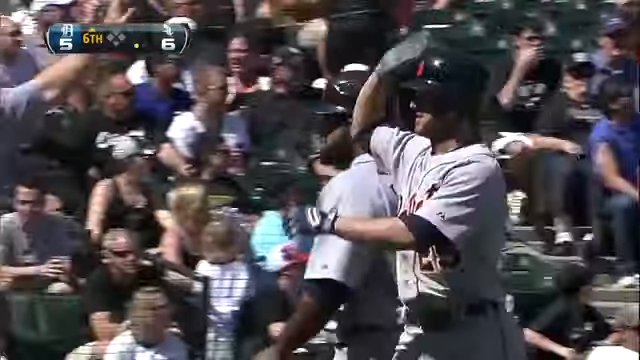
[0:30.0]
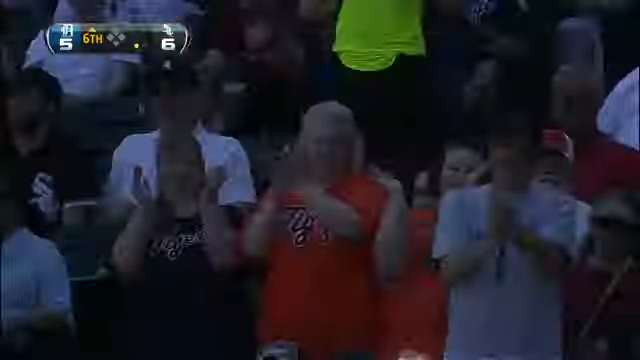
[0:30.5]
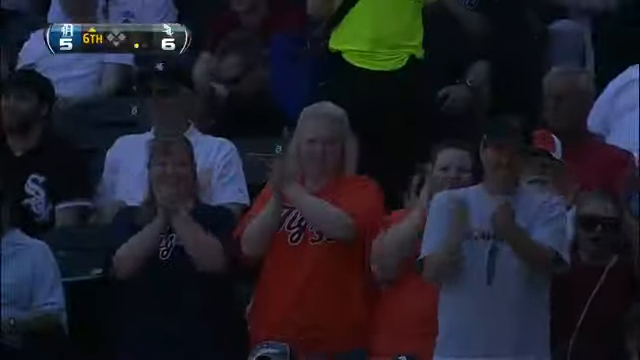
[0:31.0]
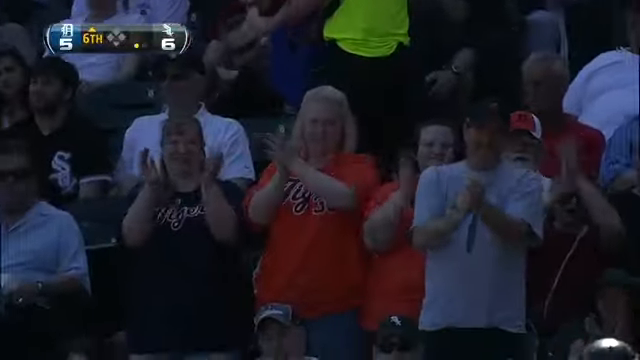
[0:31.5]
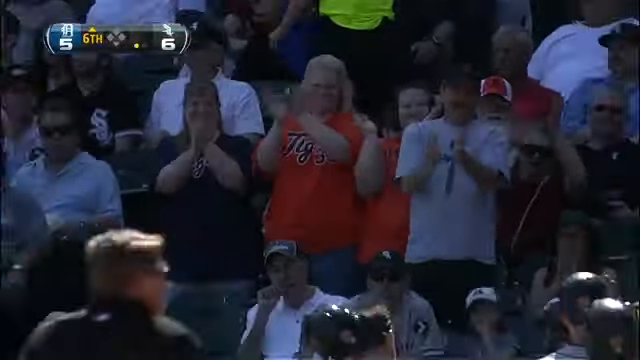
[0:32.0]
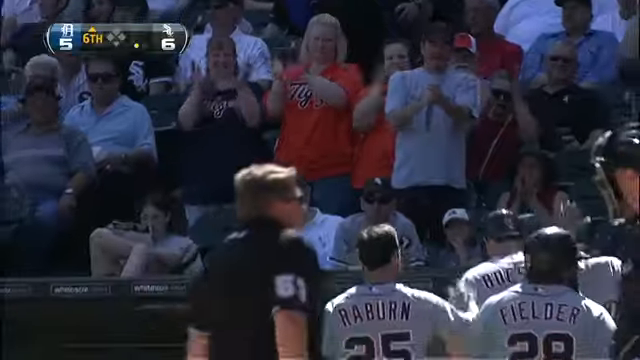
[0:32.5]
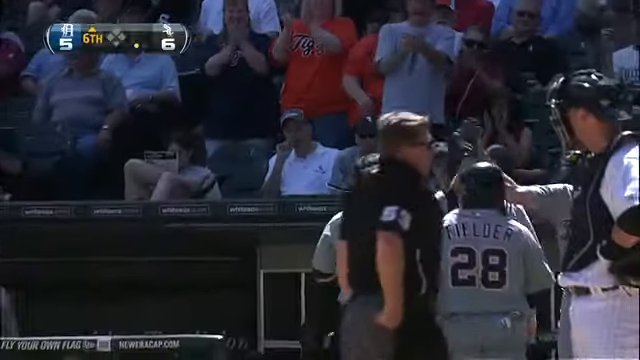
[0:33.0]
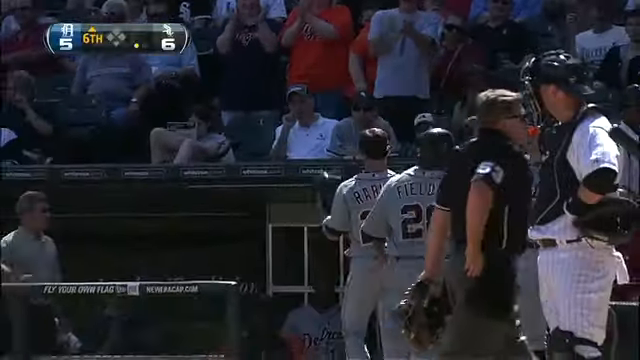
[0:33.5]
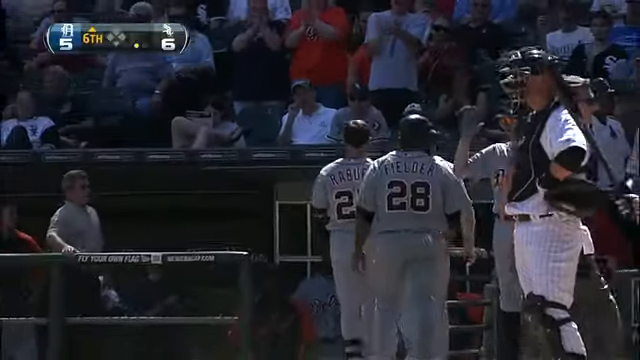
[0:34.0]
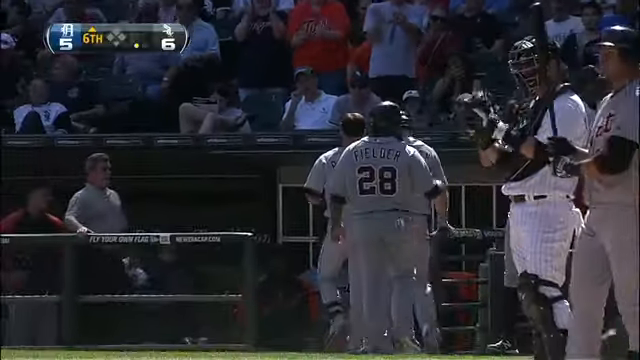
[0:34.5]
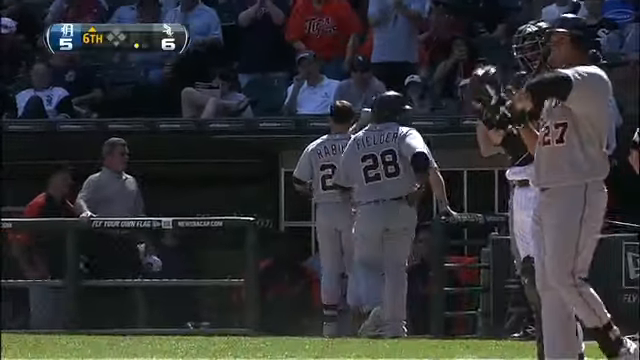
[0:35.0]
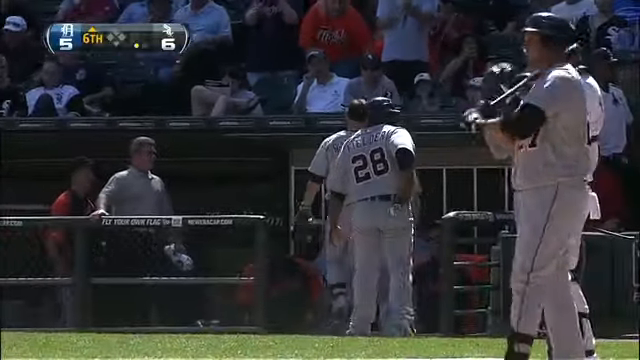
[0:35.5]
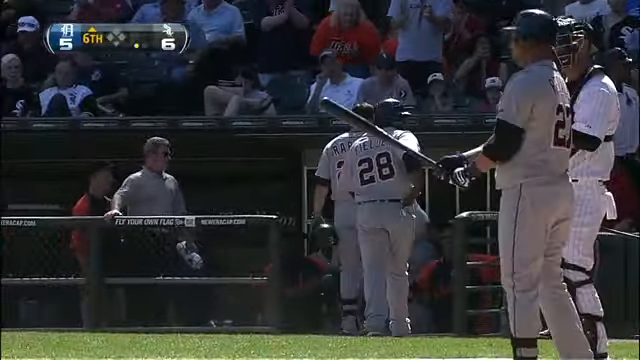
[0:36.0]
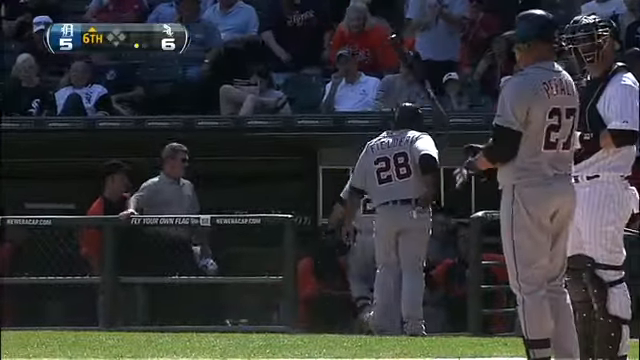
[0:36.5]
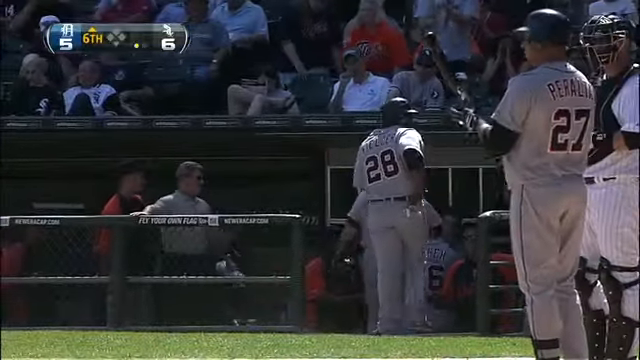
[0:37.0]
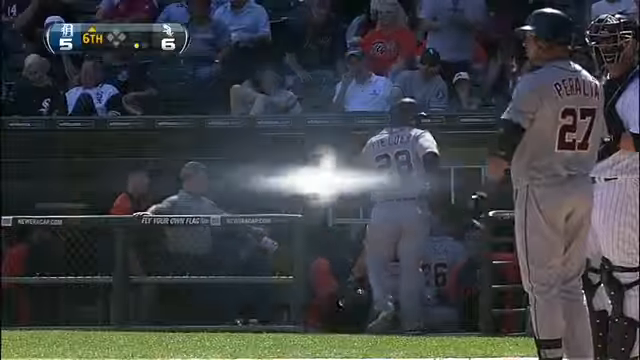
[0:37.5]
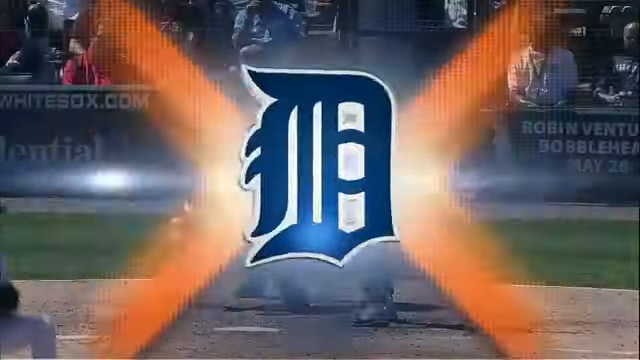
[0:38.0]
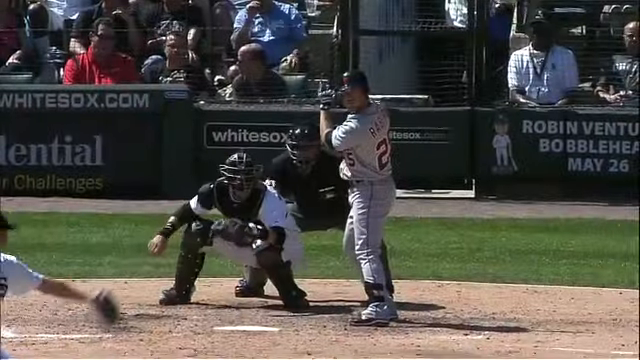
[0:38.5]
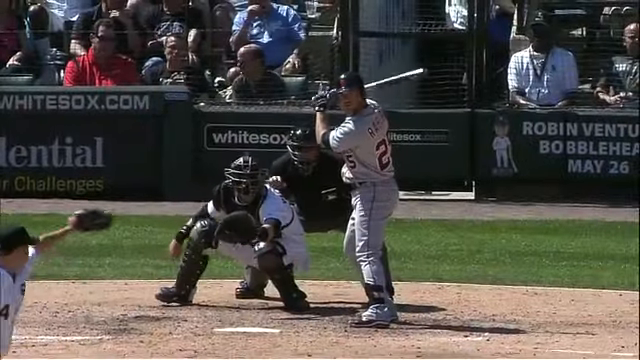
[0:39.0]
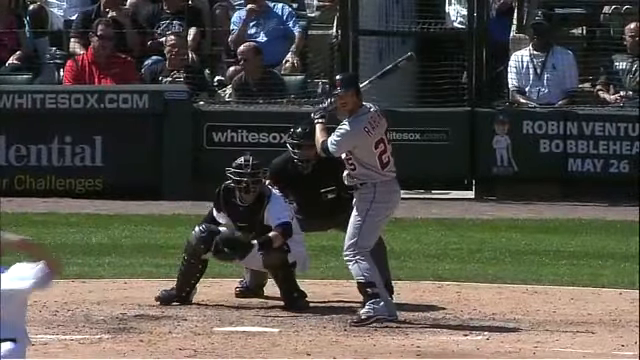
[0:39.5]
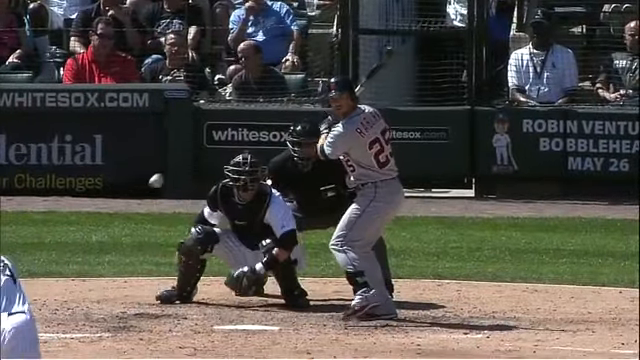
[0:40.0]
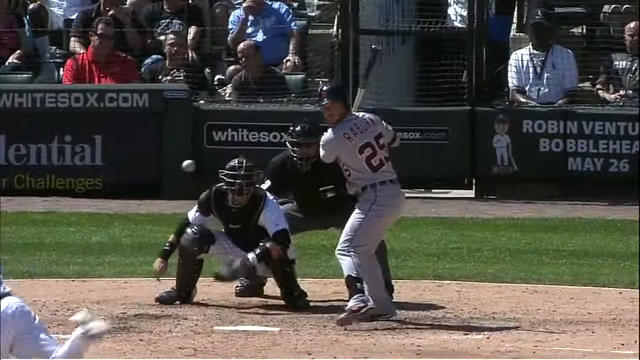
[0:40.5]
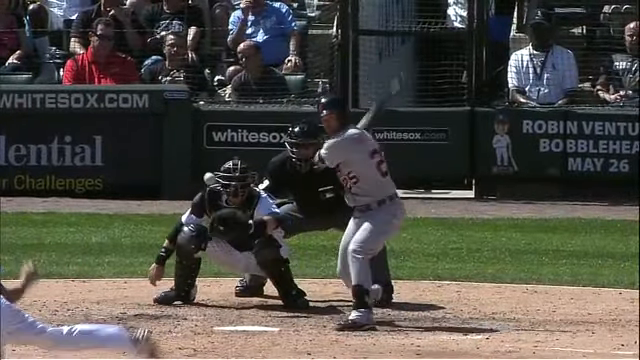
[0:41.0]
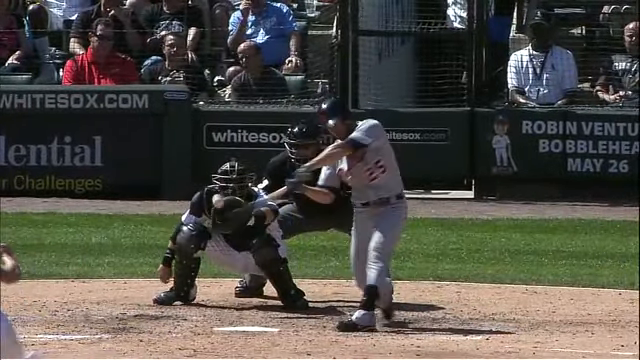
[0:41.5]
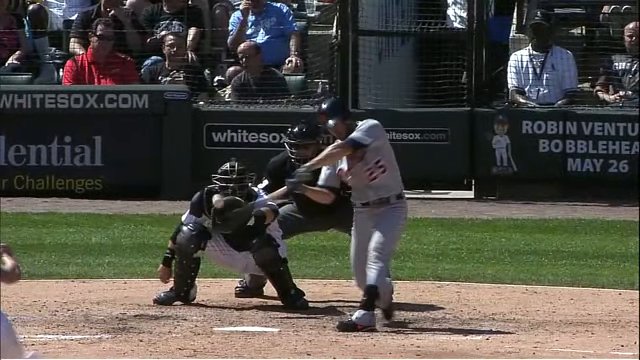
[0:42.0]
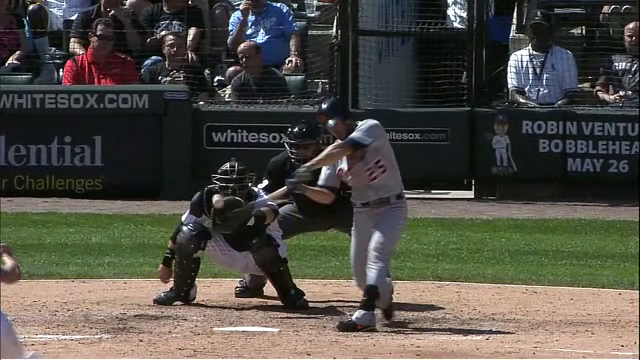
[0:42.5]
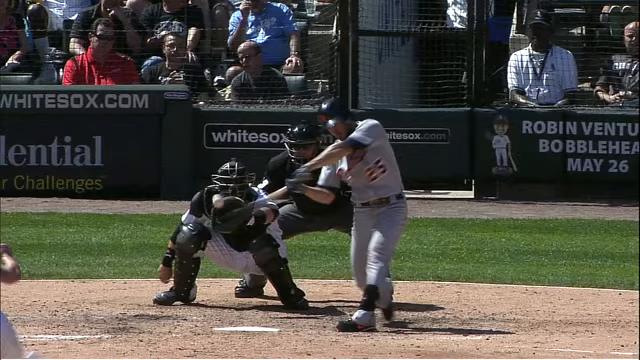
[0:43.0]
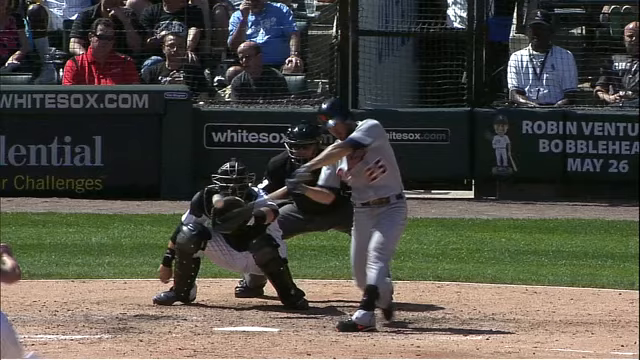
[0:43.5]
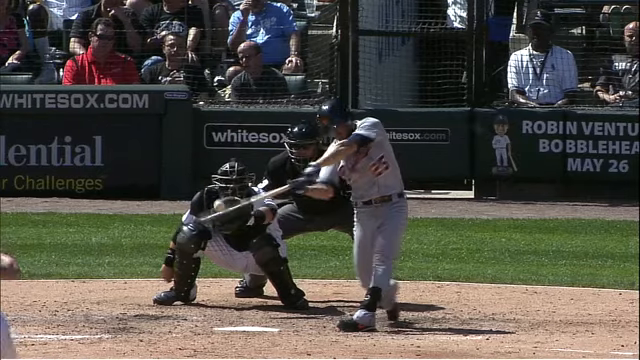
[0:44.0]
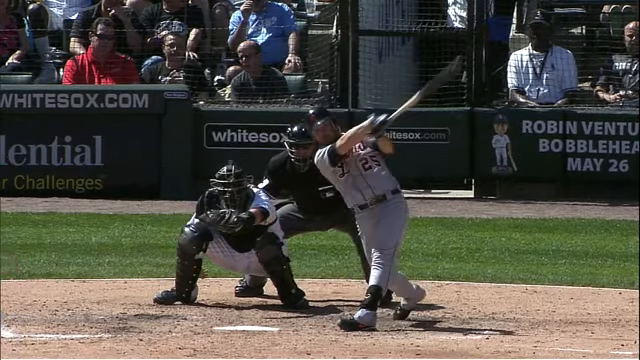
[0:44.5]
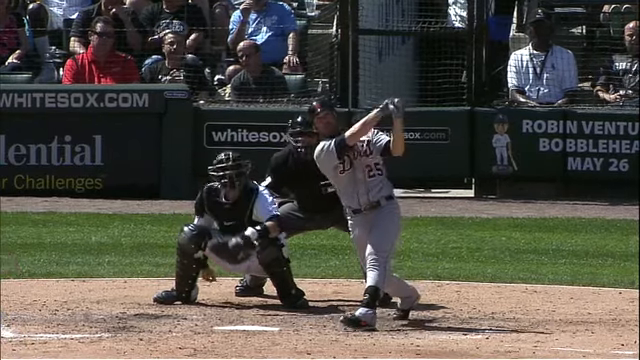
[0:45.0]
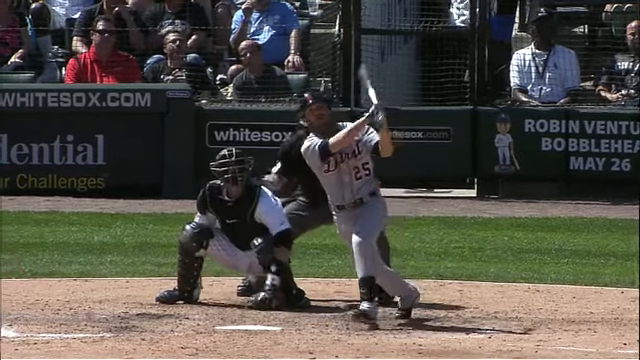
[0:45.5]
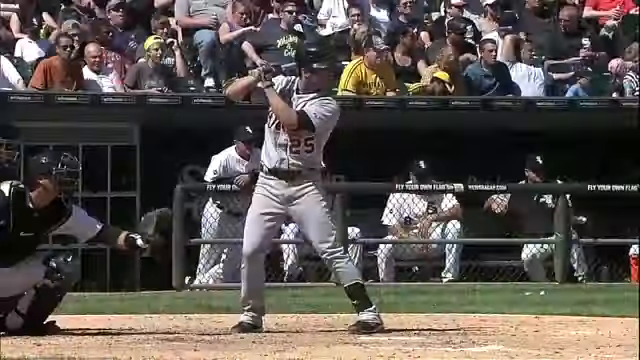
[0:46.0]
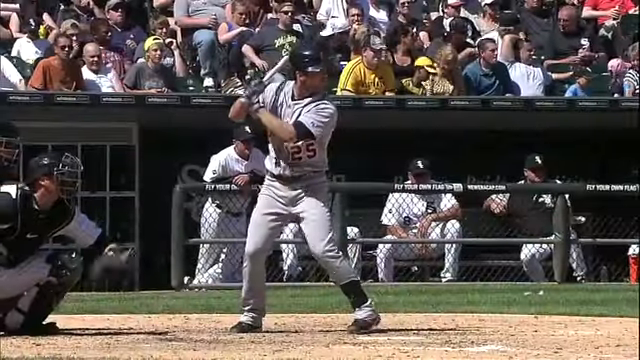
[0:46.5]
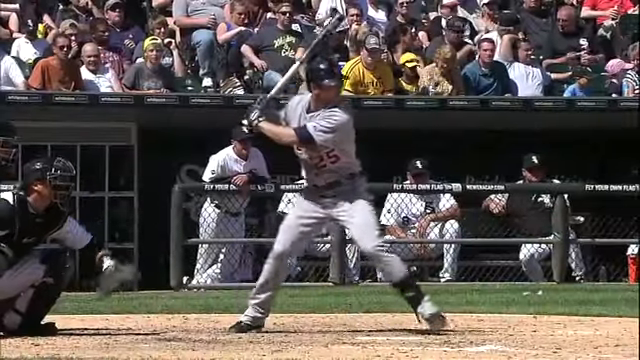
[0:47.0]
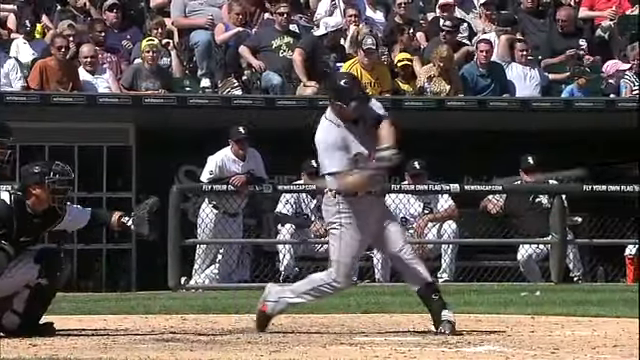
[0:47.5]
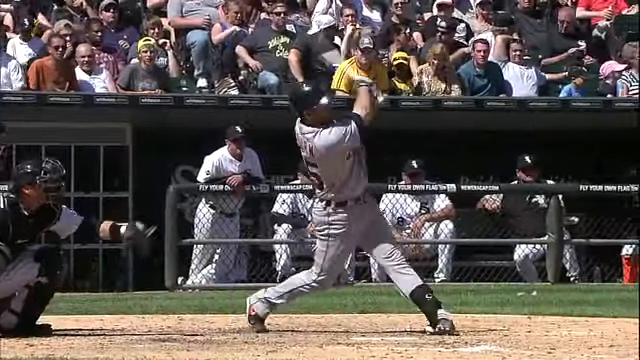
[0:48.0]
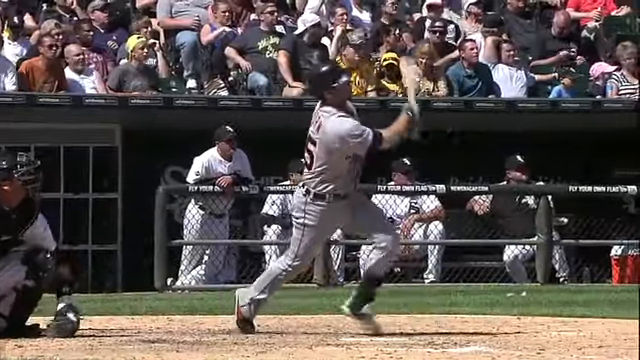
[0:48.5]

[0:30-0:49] Cricket players play on a green field with dusty patches here and there. The spectators are shown watching the game from the sides. A player in a white shirt, white pants, black shoes and a white hat runs toward his teammates and gives them high fives. A few players then leave the field, possibly to take a break. The game is then replayed as a recap in slow motion: one player bats while another bowls, and the ball flies out of the field. The spectators jump for joy, as their team is winning. A player runs to fetch the ball and hugs his teammates. Other spectators on the side clap; the supporters are a mix of light-skinned and dark-skinned people.